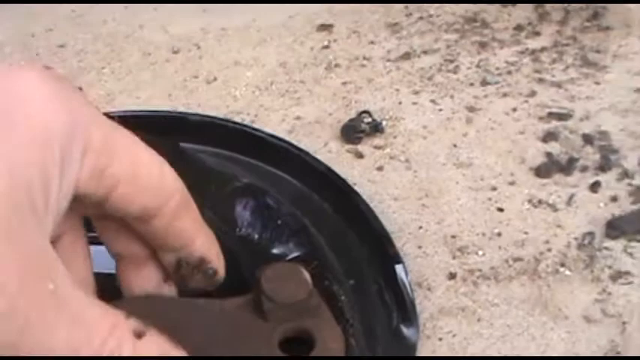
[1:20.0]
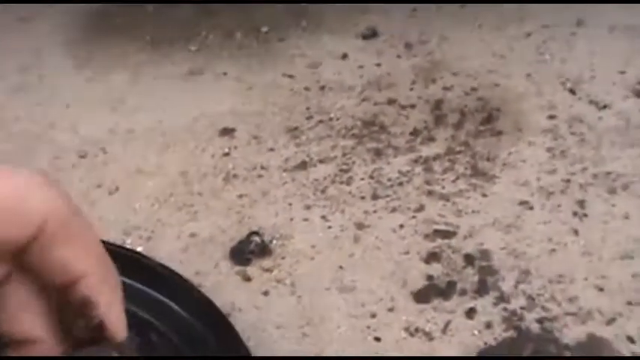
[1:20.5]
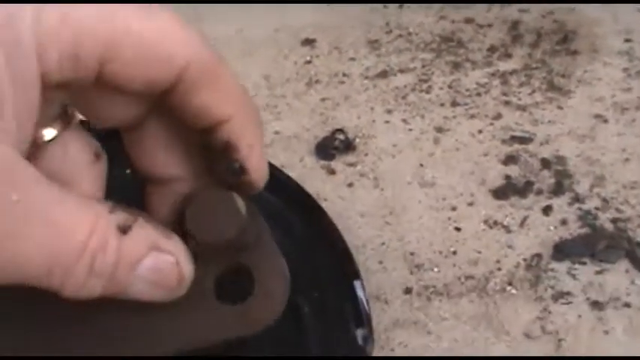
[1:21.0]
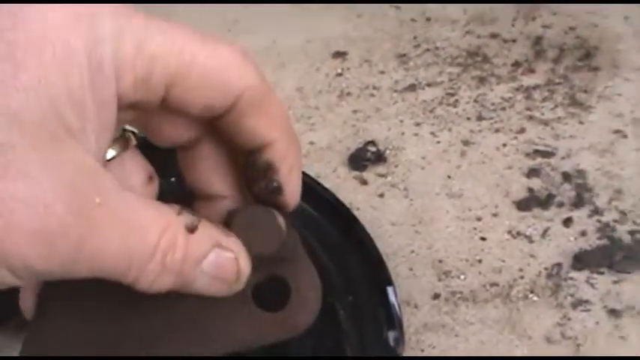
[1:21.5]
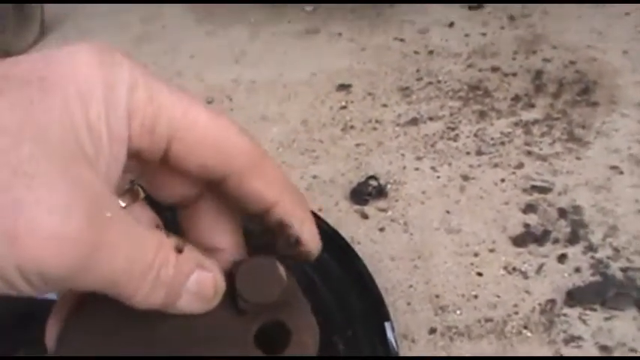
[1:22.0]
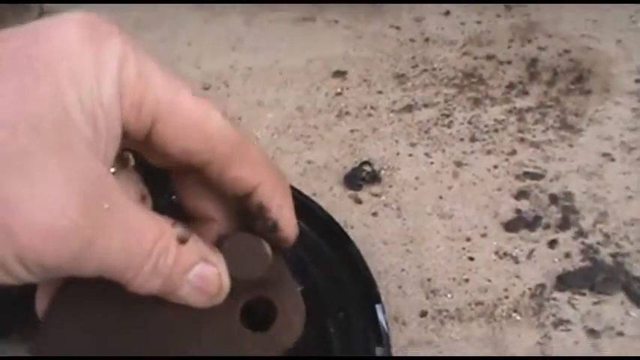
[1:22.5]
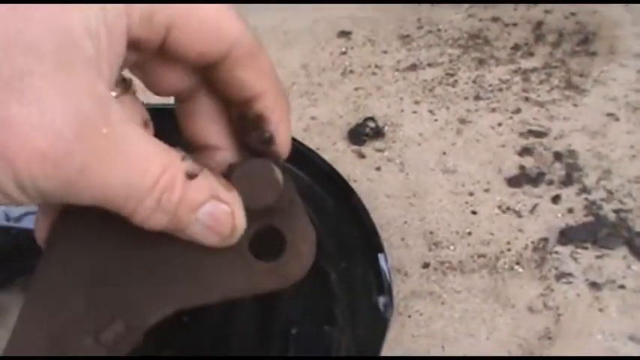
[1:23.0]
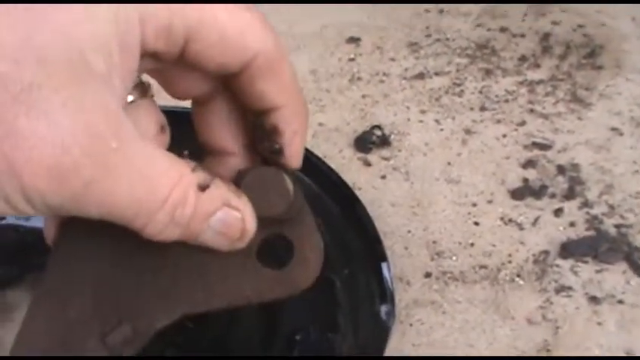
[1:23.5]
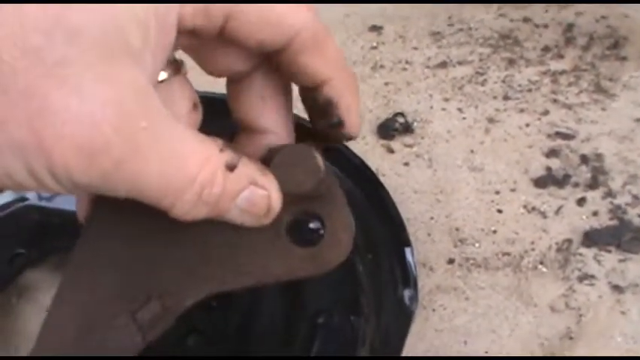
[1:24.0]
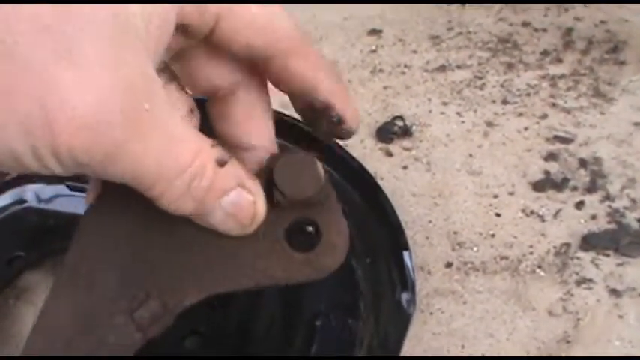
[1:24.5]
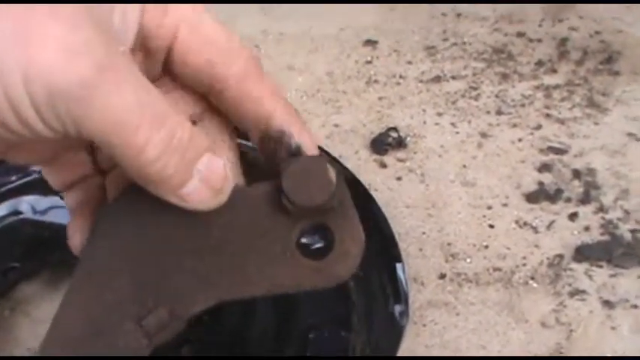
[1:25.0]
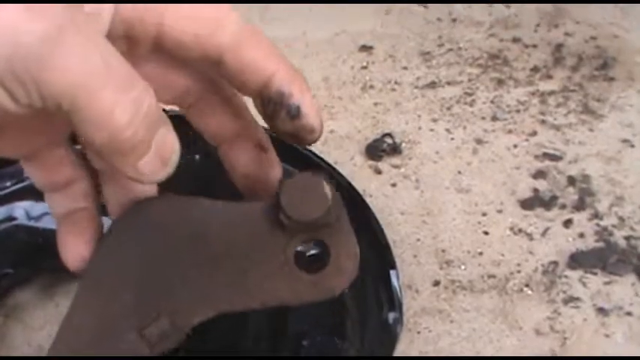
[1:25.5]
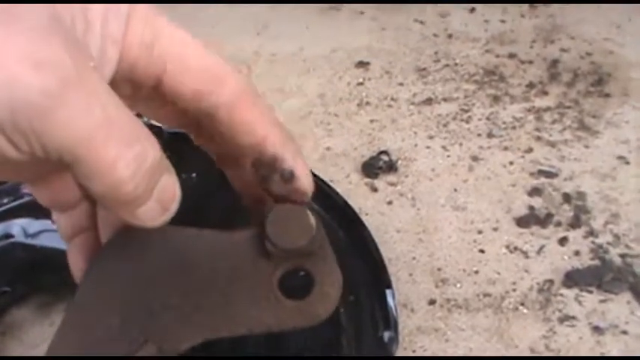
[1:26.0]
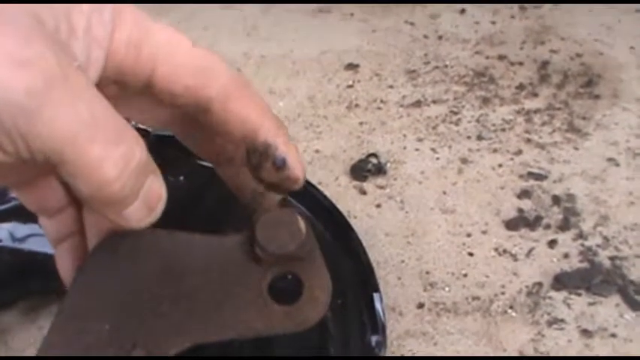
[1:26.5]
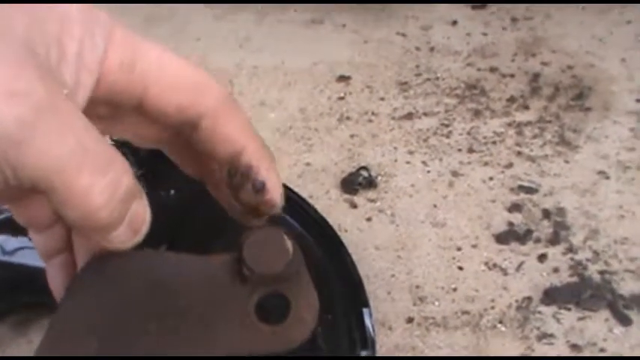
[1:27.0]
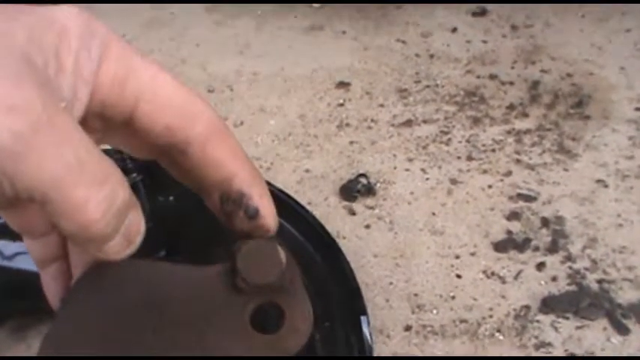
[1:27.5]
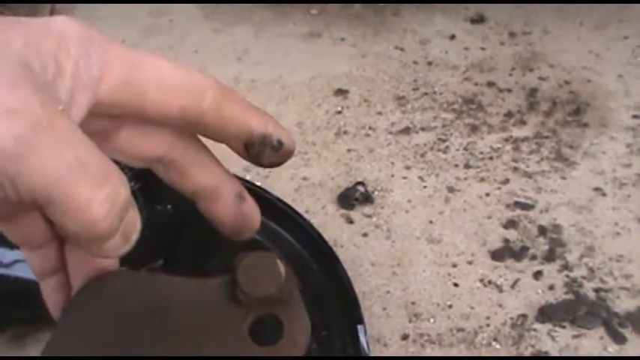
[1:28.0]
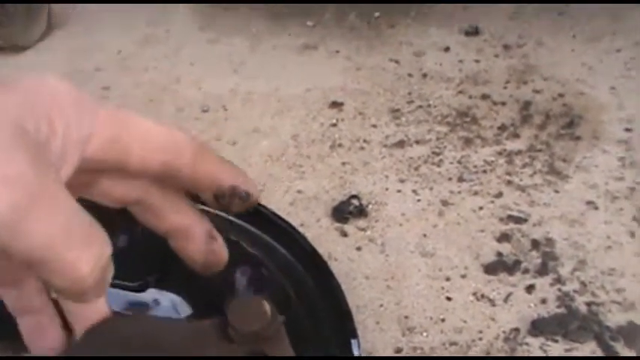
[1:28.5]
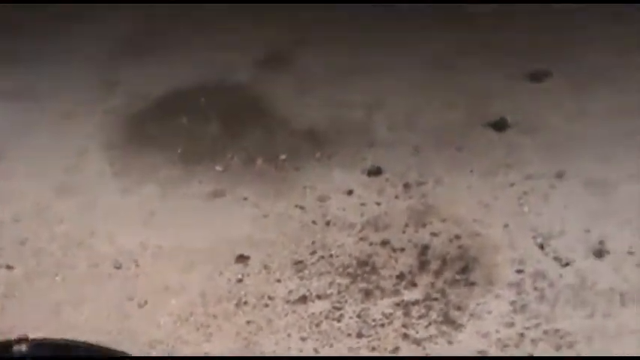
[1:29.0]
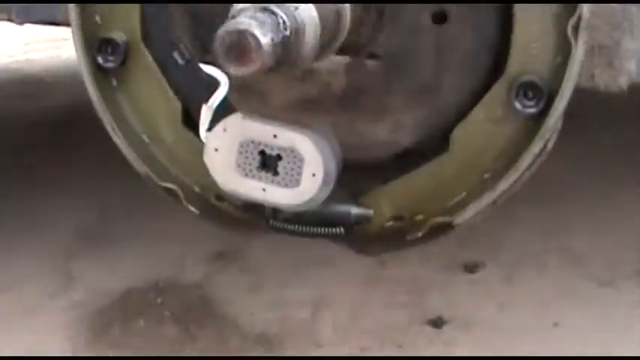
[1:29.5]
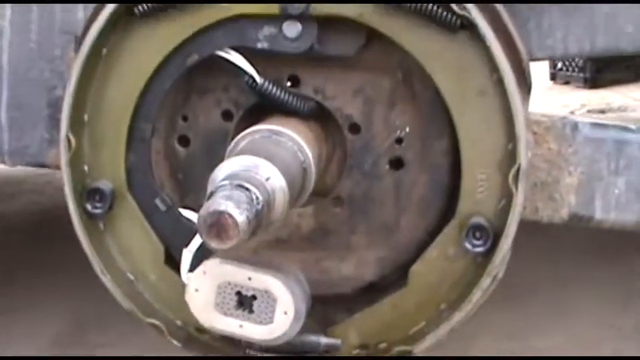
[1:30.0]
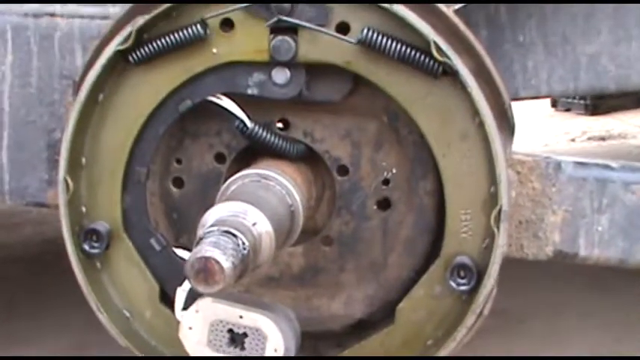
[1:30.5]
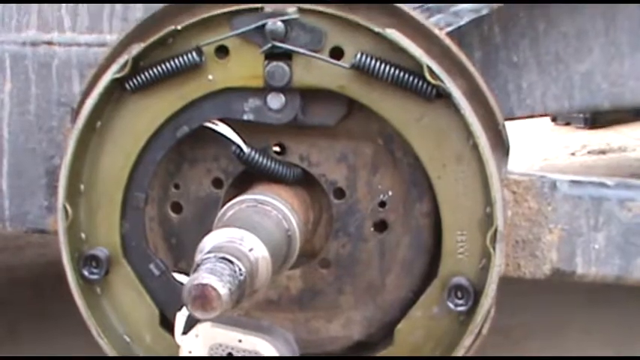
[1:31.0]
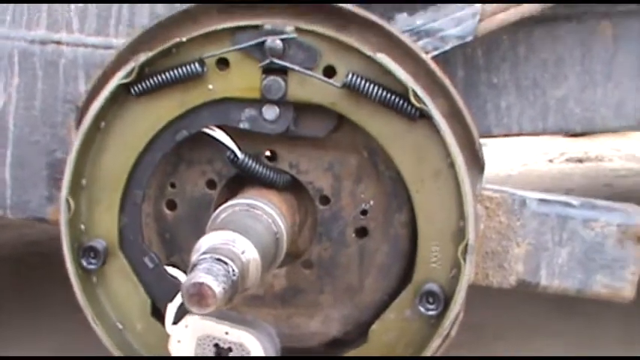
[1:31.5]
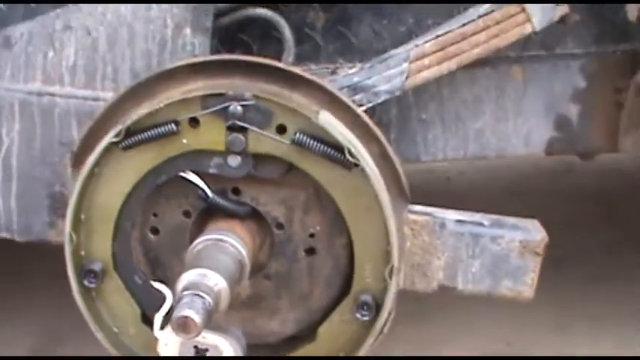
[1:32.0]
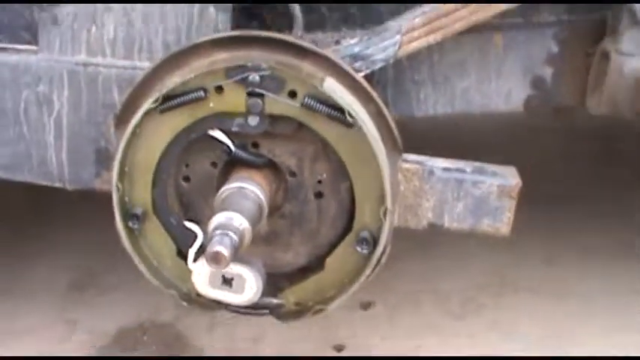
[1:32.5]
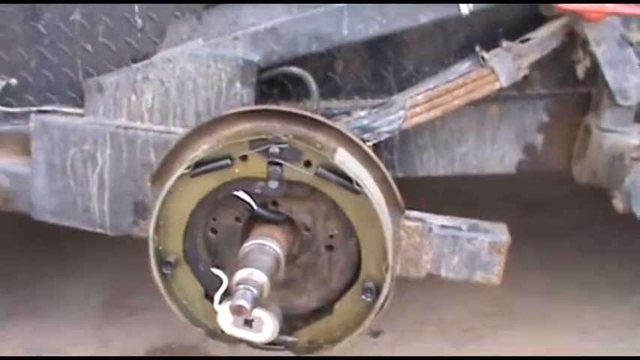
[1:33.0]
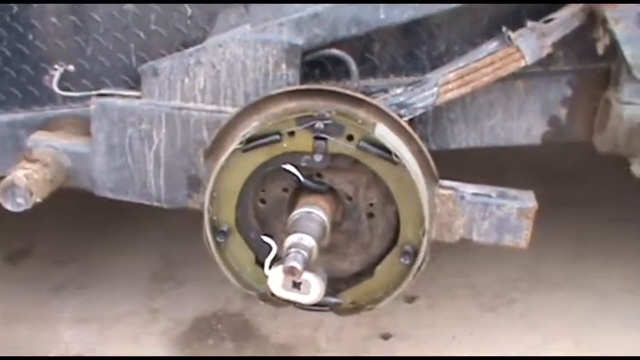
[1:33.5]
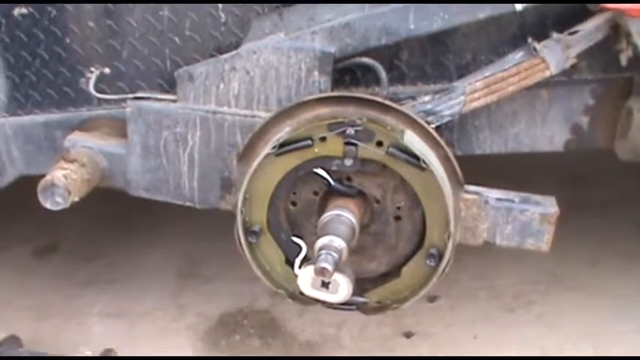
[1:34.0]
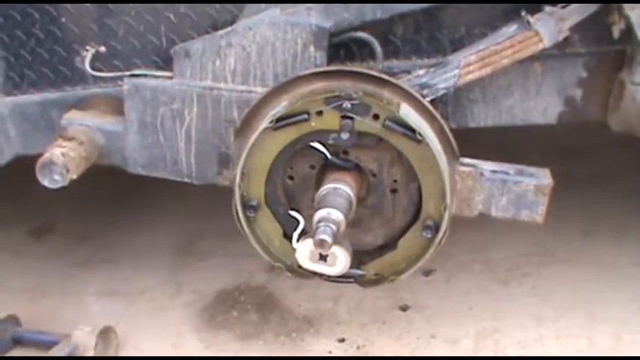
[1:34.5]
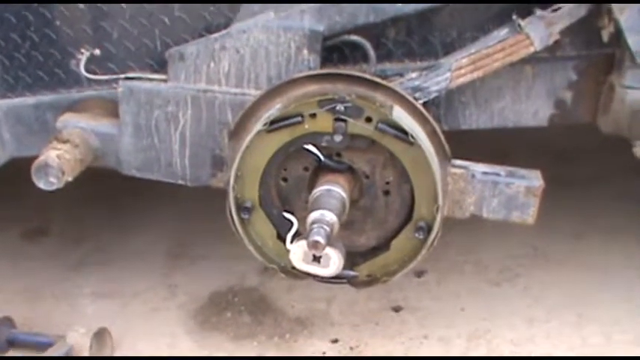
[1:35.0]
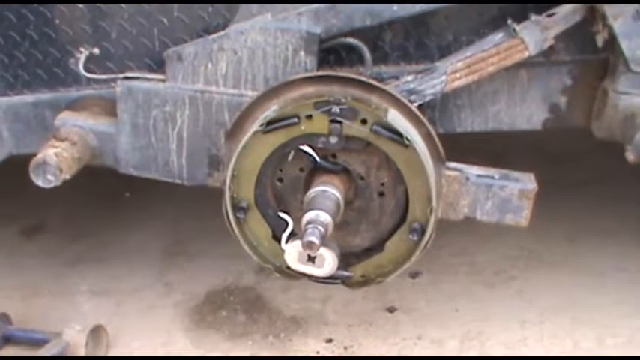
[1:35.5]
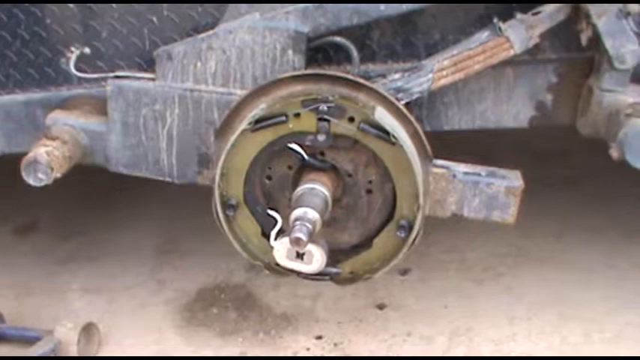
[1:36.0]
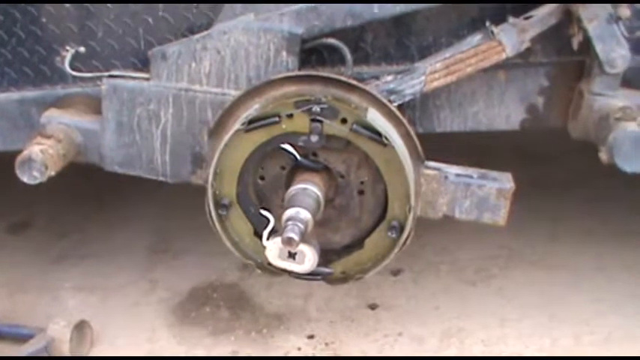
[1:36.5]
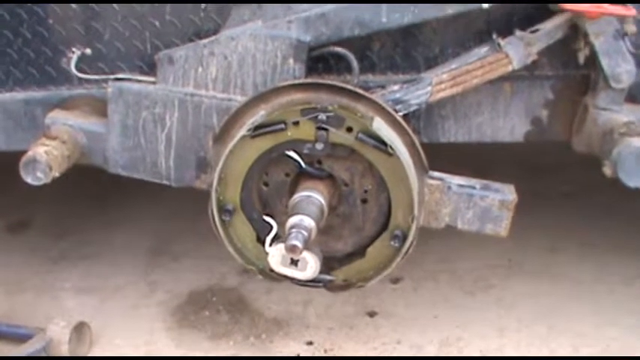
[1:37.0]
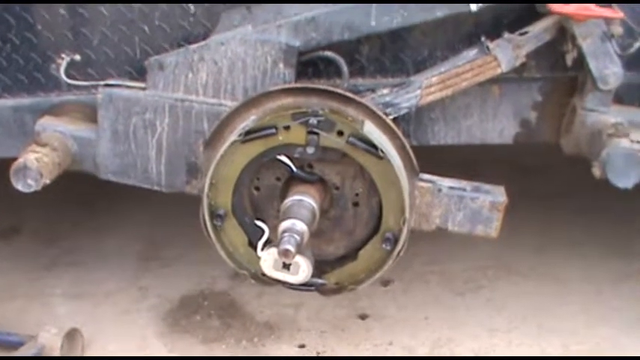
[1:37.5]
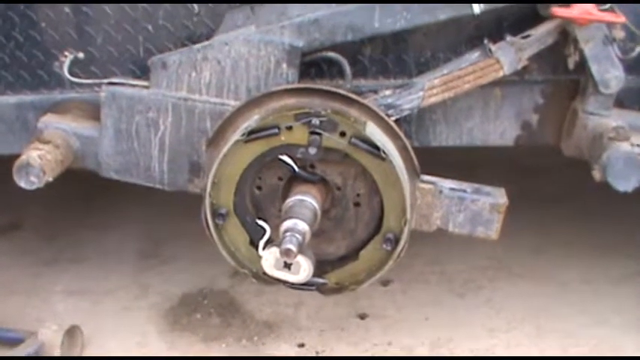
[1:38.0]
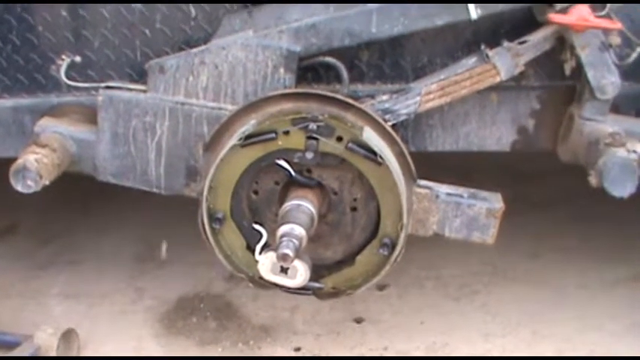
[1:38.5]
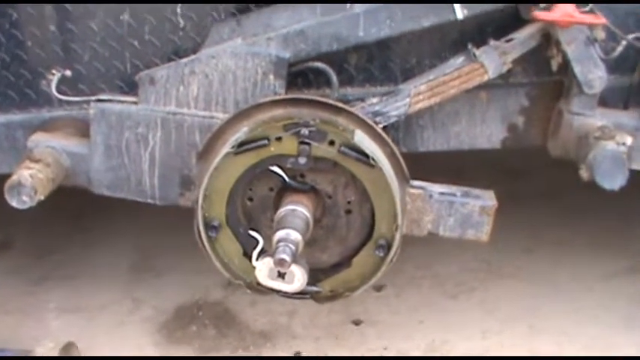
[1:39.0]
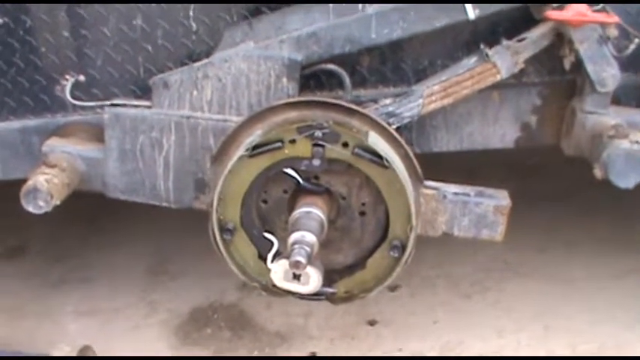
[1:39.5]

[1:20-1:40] The hand moves down toward the black metal and pulls off a rusted metal piece. The pointer finger comes from the top left corner, with a little of the webbing between finger and thumb visible, the thumb going down and the middle finger behind the piece. A little of the ring finger shows just above the thumb, wearing a gold ring. The piece is lifted and kind of turned toward the camera. There is a lot of grime on the pointer fingertip and a little on the other fingers. The finger taps the top of the piece while showing it toward the bottom of the frame, then the thumb and middle finger come off it and are raised. The piece is lowered, and the camera moves back up to the part where the wheel goes on, then backs away for a wider view. It is attached to a metal piece going off the right side, probably six inches wide, and on the left side a wider plate goes up to a big metal piece, a rod sticking out that it is hooked into. A little snow is still coming down, and the concrete with grime on it is visible.